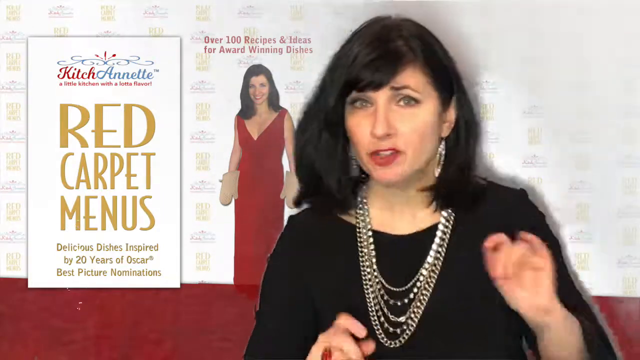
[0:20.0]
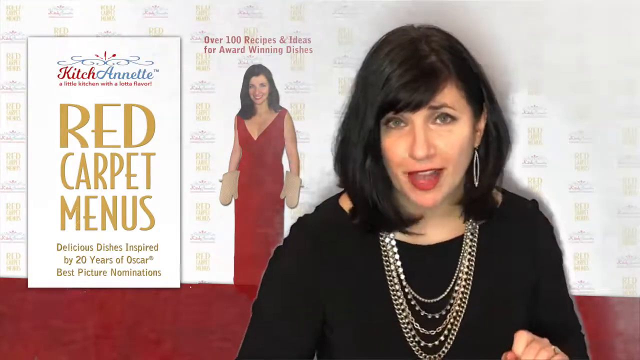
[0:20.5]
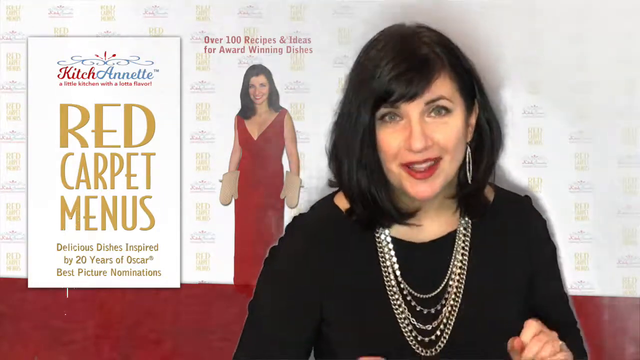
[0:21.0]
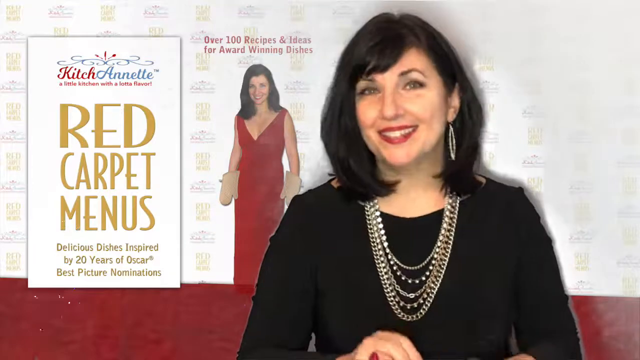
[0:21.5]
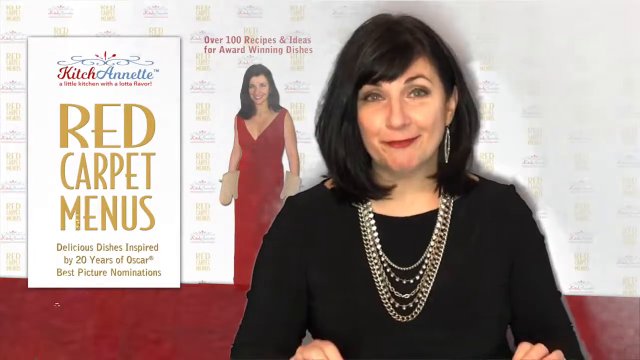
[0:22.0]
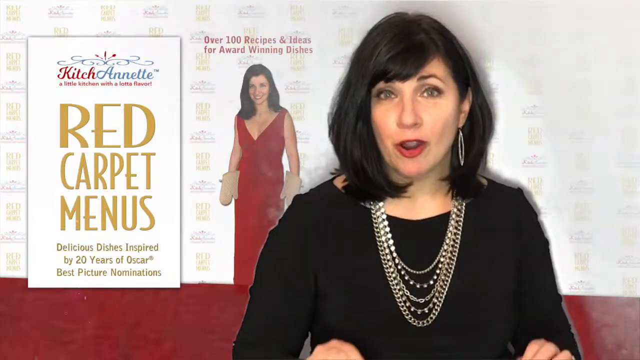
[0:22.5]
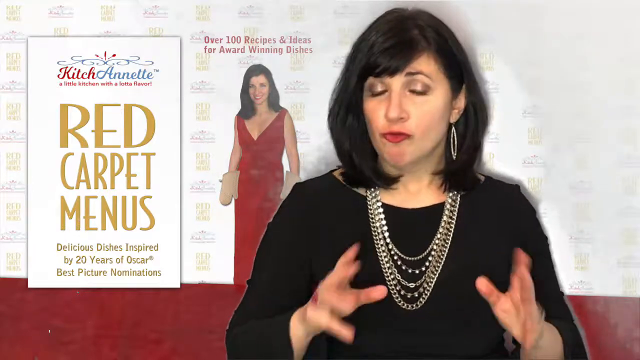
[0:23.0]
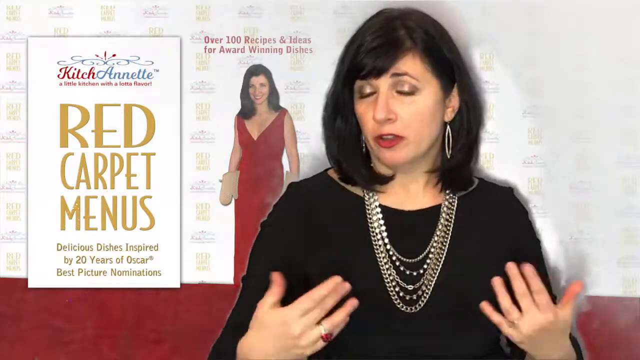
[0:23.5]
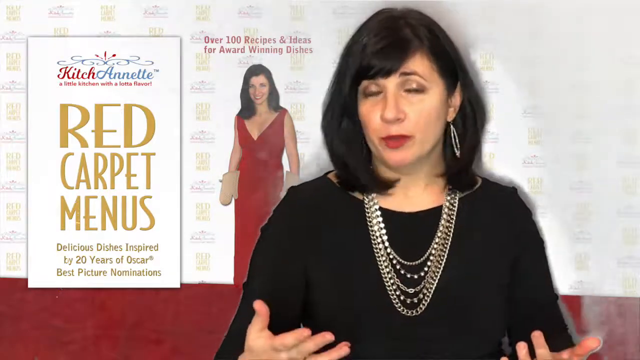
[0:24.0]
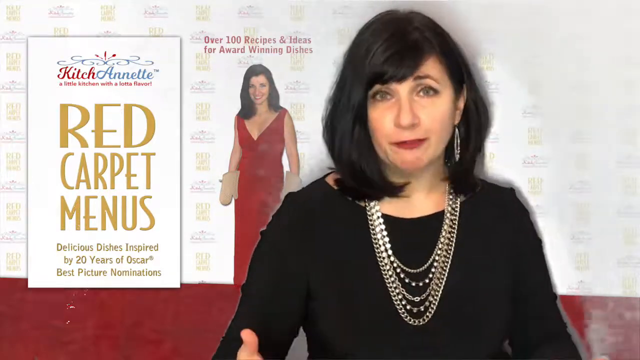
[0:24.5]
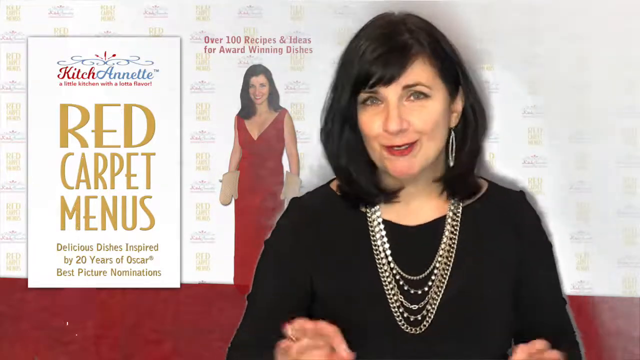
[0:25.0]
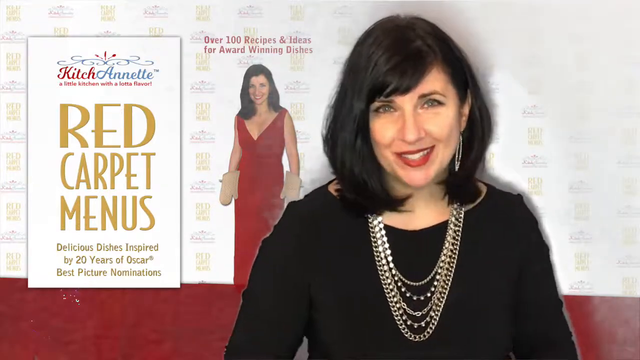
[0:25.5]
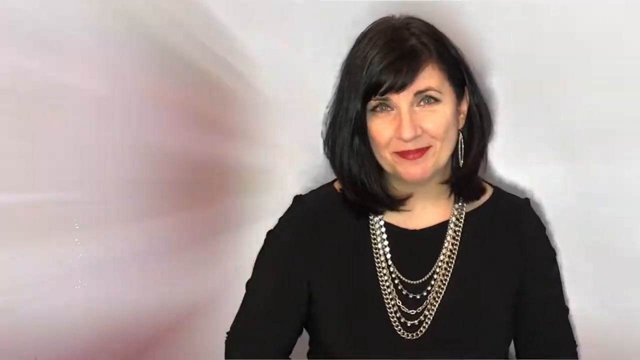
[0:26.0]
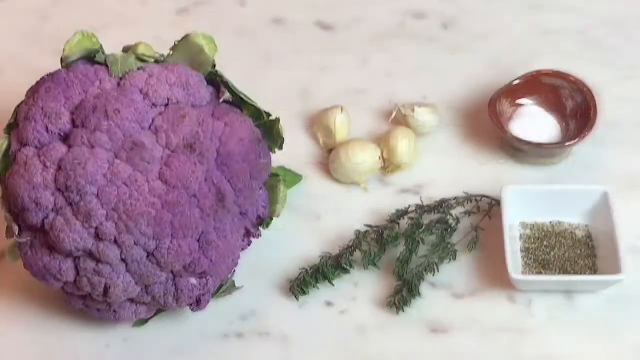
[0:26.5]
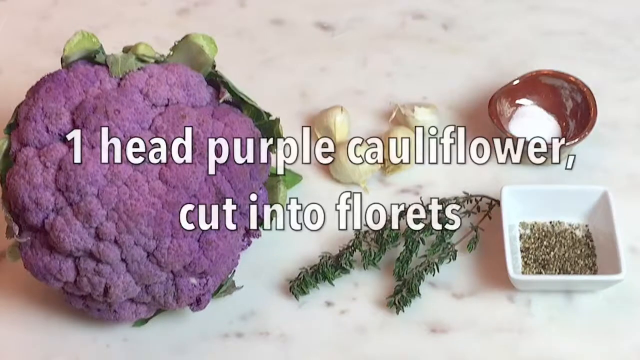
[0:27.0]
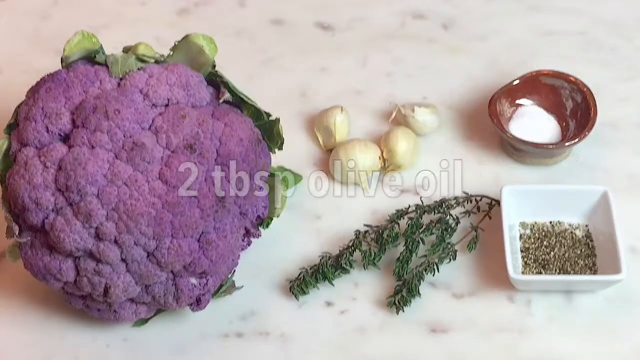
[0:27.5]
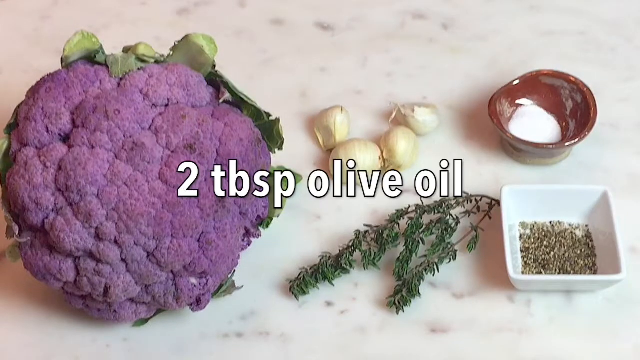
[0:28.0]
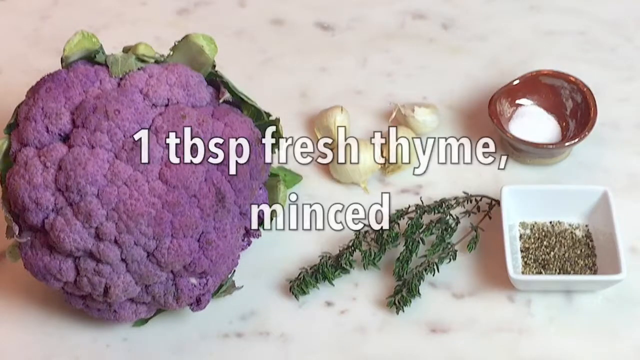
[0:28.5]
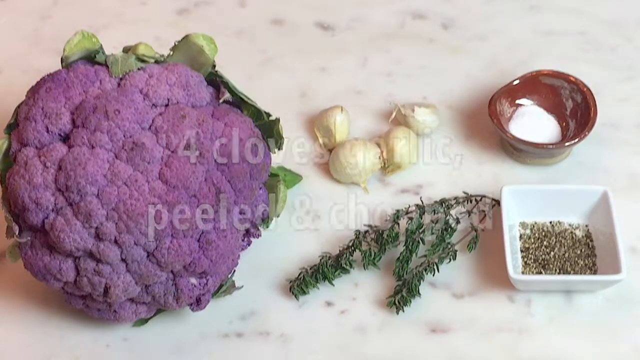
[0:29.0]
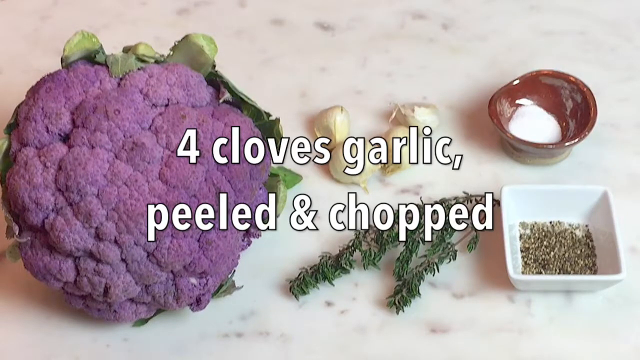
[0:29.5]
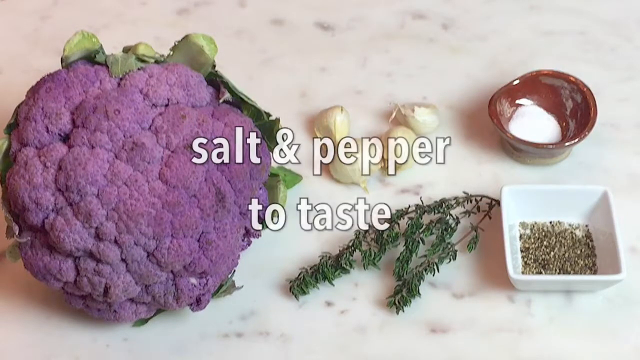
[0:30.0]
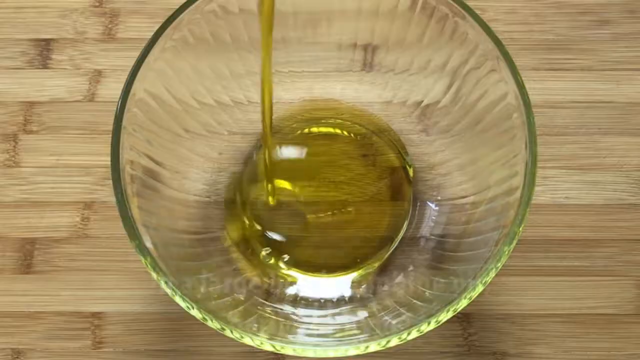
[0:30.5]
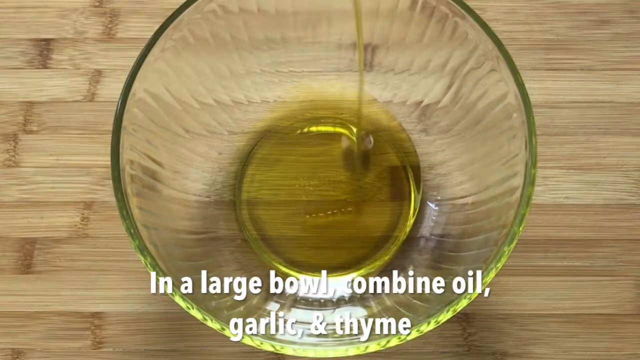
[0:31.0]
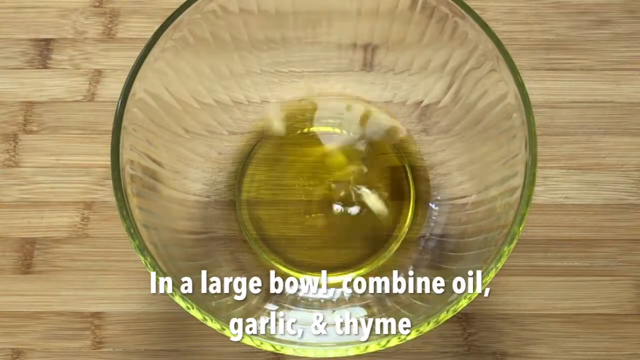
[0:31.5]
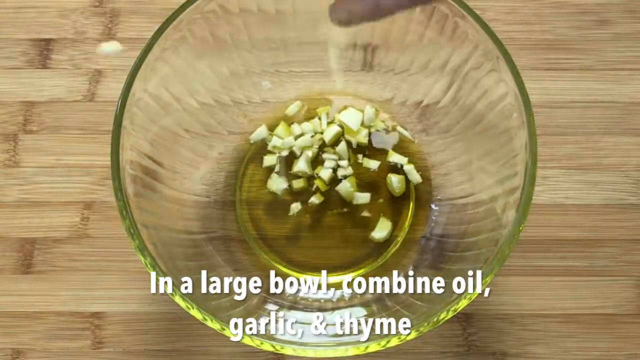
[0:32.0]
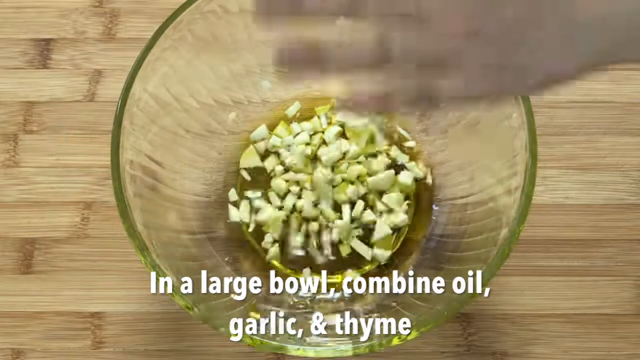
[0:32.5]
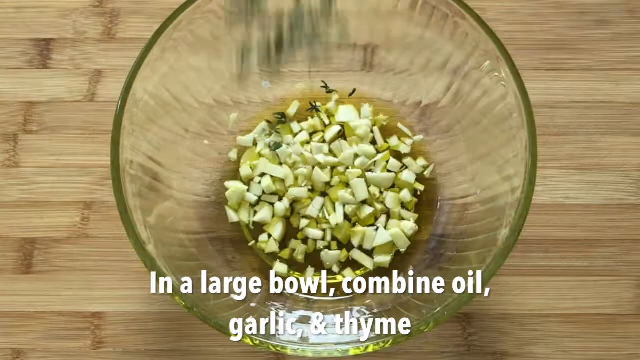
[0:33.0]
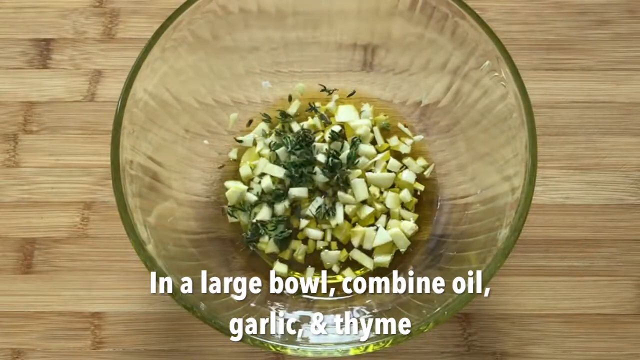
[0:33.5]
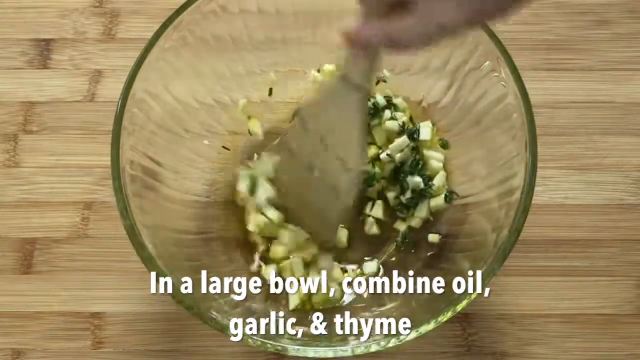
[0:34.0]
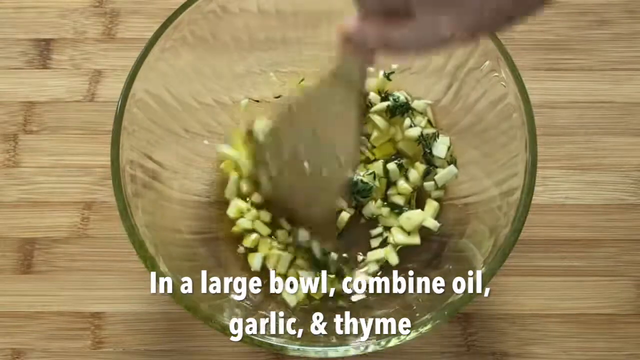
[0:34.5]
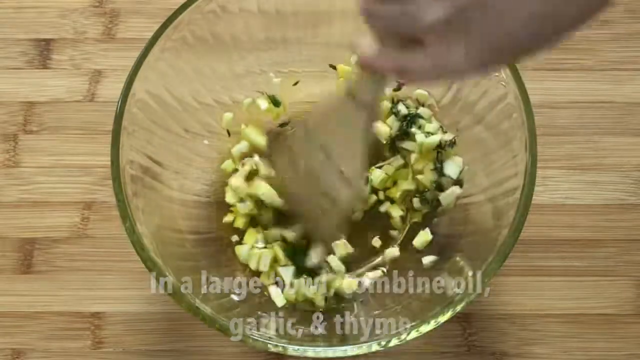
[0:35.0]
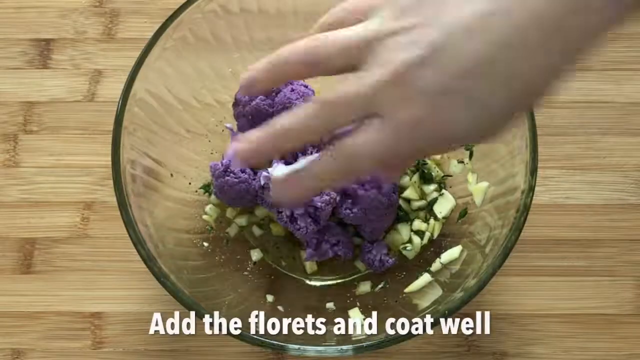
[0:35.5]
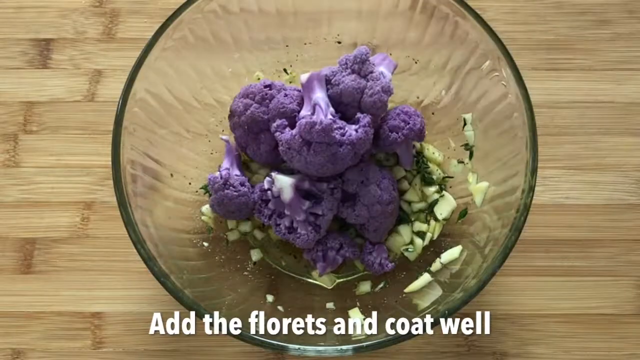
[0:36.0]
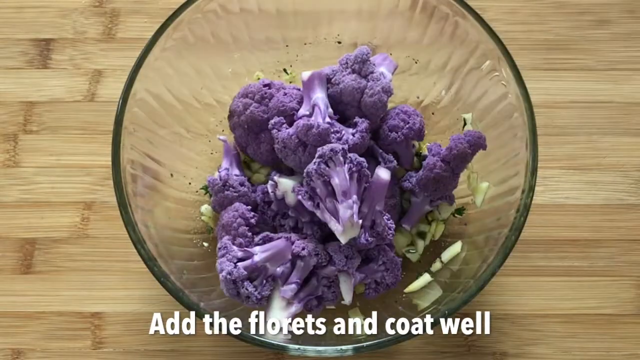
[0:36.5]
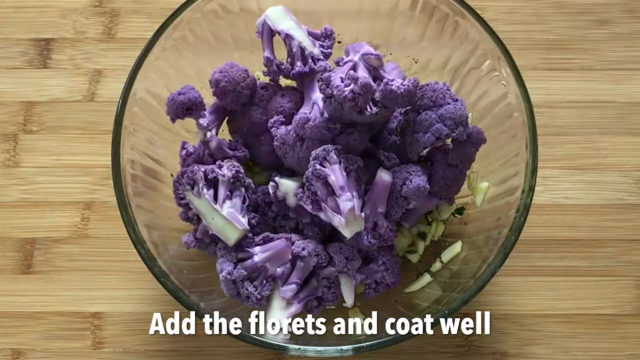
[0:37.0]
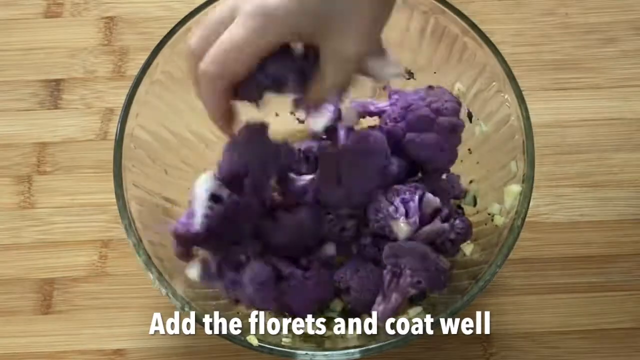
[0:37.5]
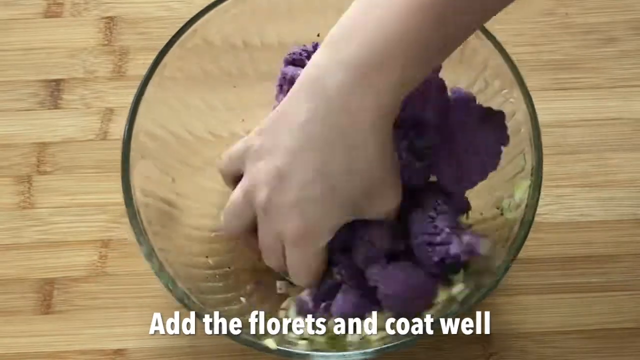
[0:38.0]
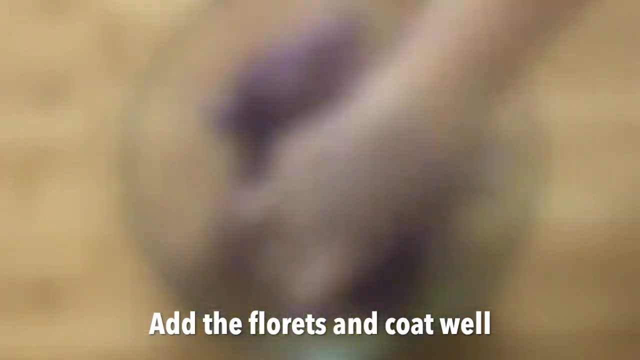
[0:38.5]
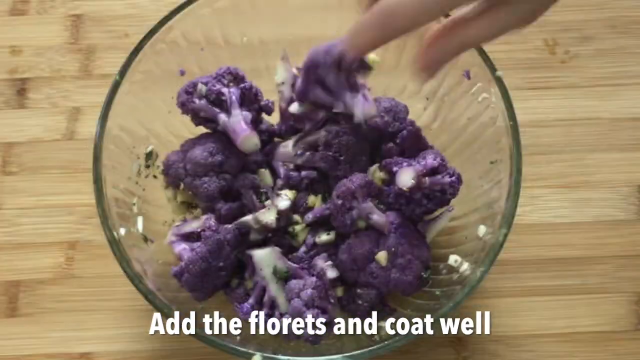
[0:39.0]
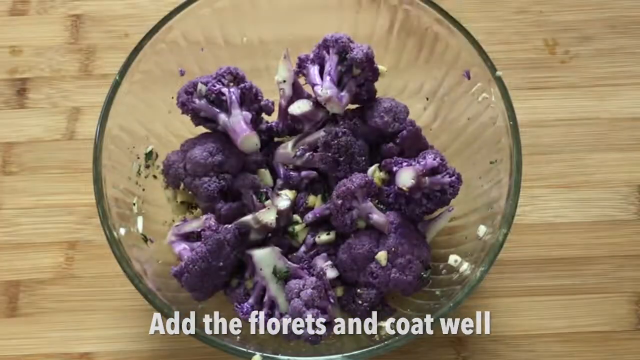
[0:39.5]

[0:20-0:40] The woman wears multiple sets of beads or necklaces around her neck, large hoop earrings and a dark dress, and has dark, short black hair. A screen then lists ingredients: one head of purple cauliflower cut into florets, two tablespoons of olive oil, some fresh thyme, mint, four cloves of garlic, and some salt and pepper. Next, in a large glass bowl on what looks like a wooden cutting board, the ingredients are combined and mixed with a wooden spoon, with the person's hands visible. The video switches between these screens: the woman, the ingredients, and the cutting board with the bowl. The mixed food is then moved from the bowl to a different pan.